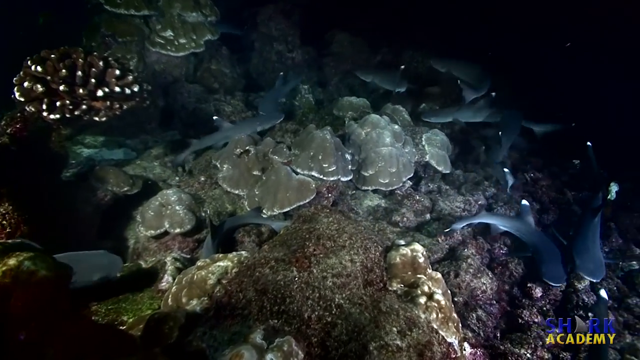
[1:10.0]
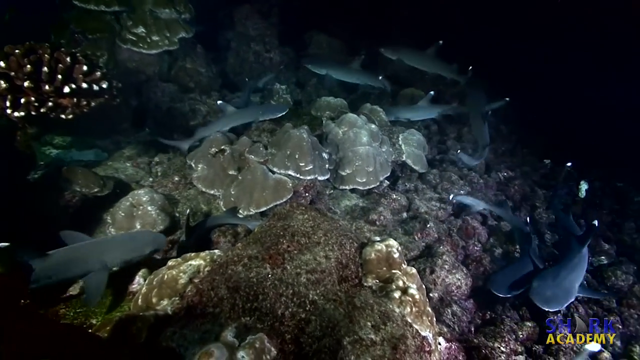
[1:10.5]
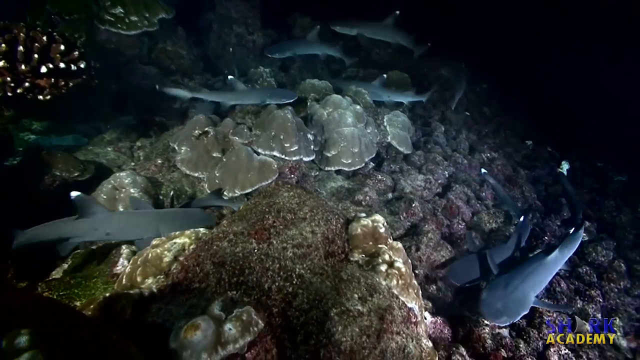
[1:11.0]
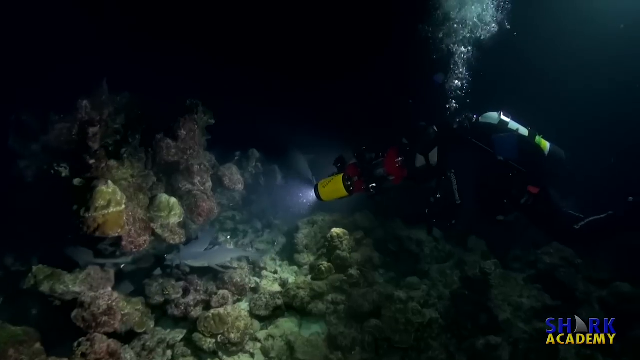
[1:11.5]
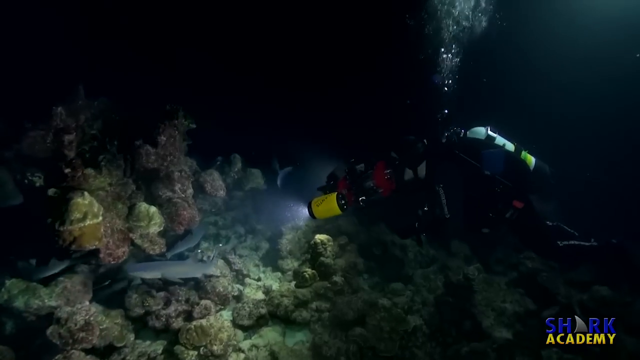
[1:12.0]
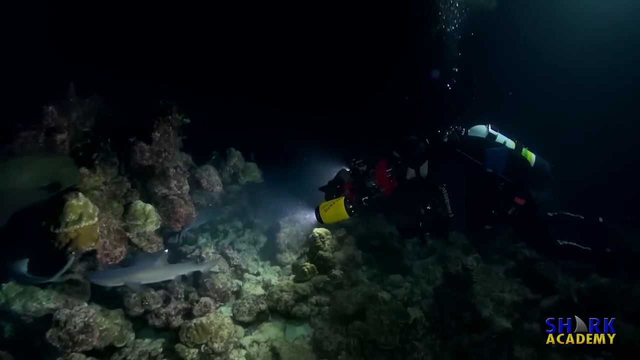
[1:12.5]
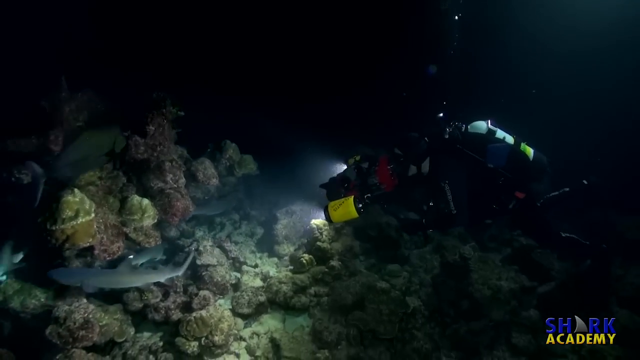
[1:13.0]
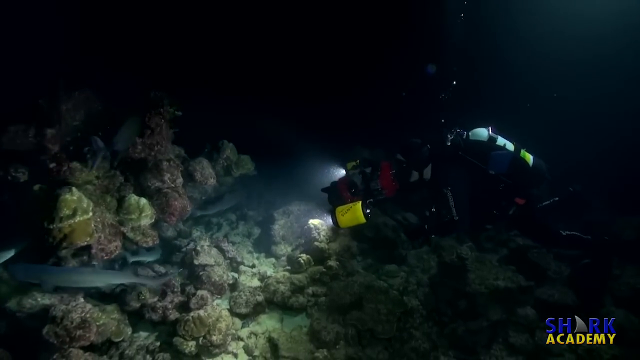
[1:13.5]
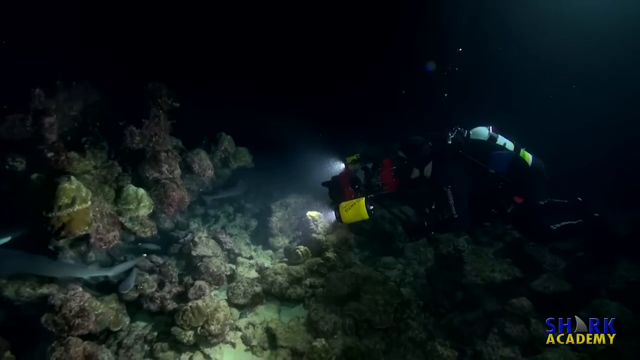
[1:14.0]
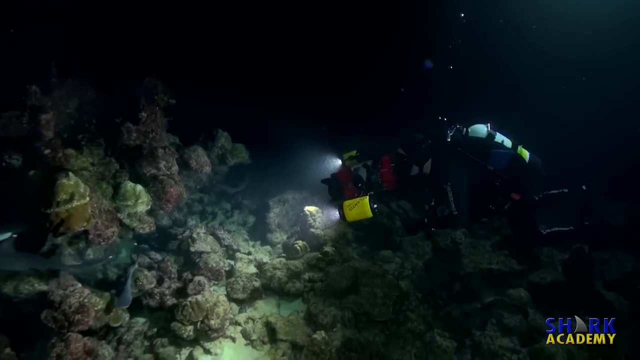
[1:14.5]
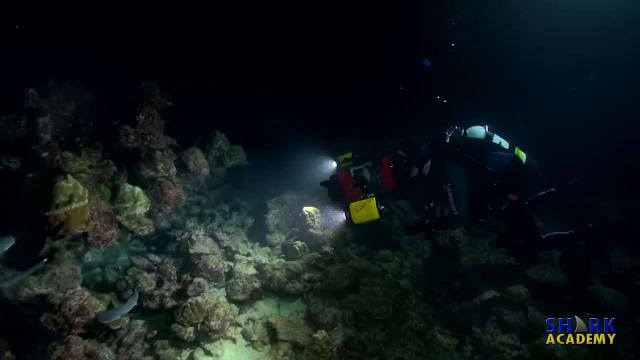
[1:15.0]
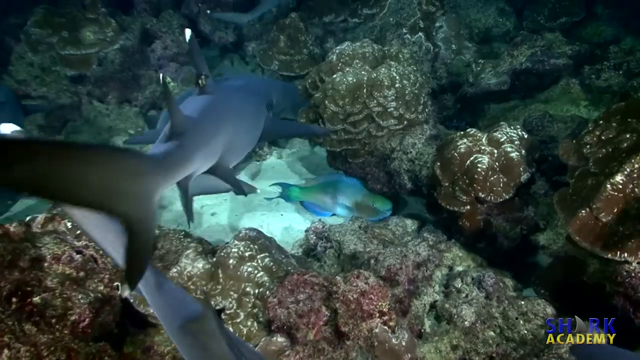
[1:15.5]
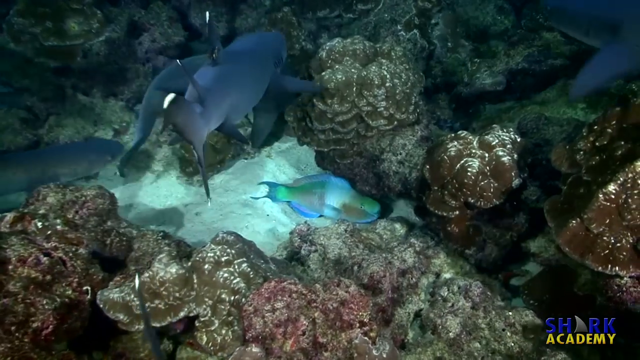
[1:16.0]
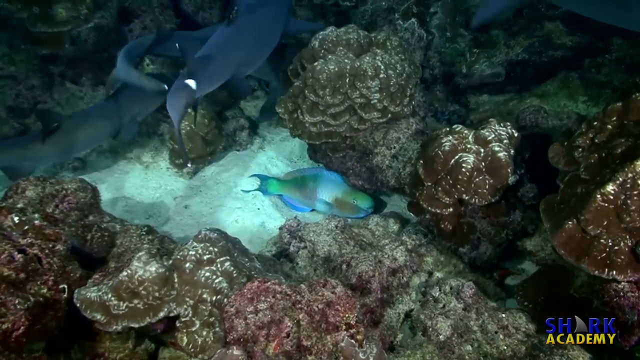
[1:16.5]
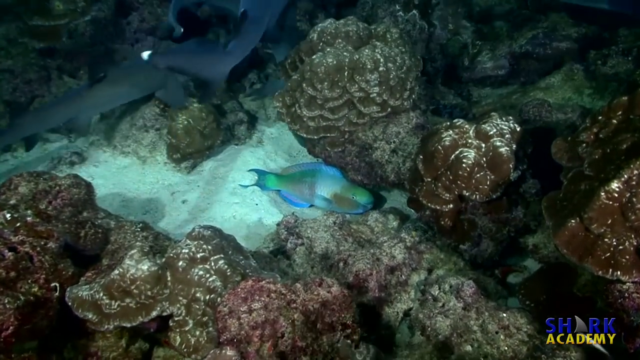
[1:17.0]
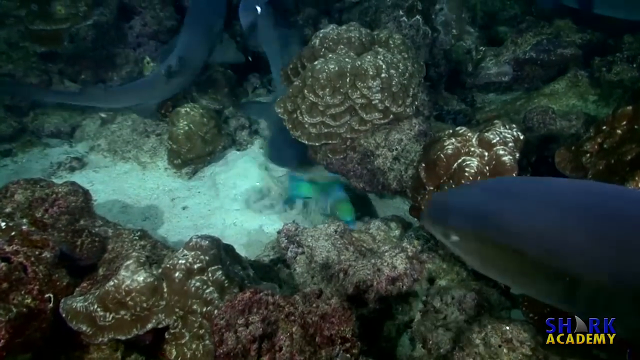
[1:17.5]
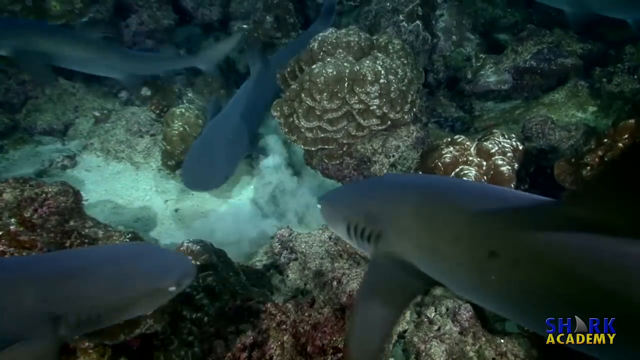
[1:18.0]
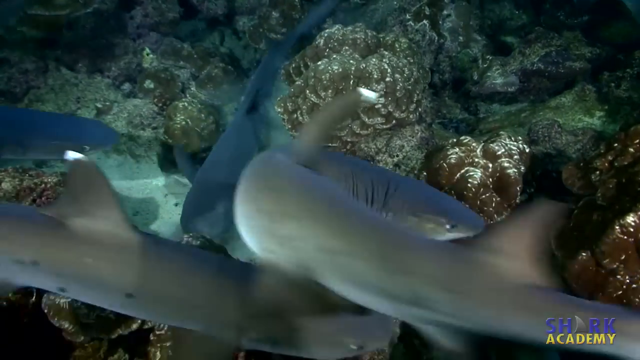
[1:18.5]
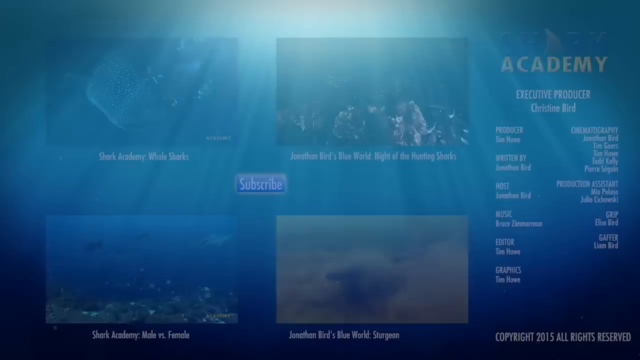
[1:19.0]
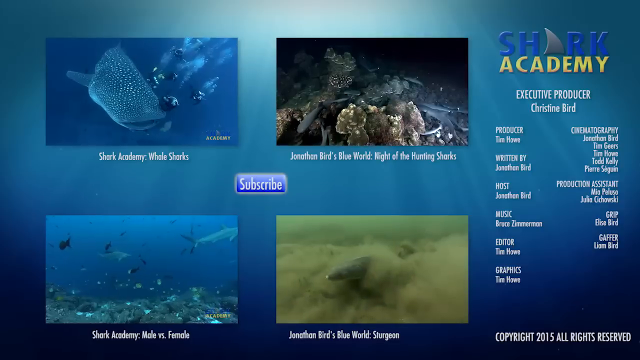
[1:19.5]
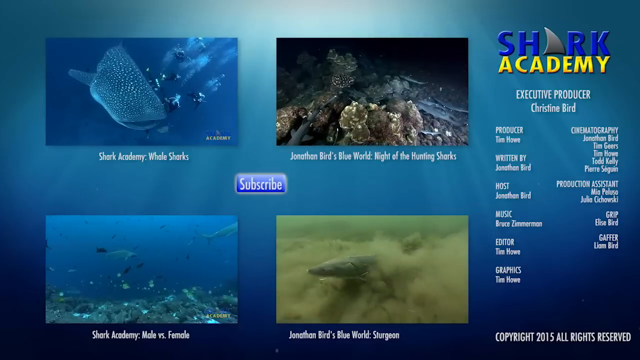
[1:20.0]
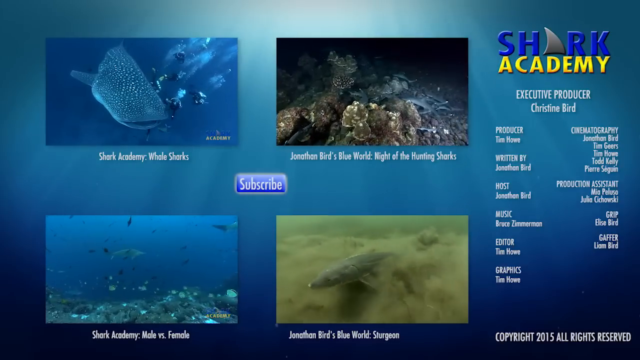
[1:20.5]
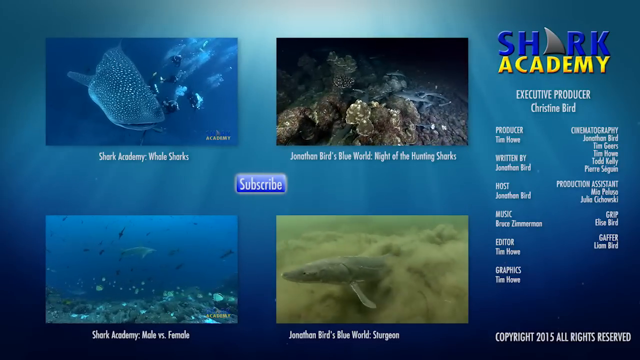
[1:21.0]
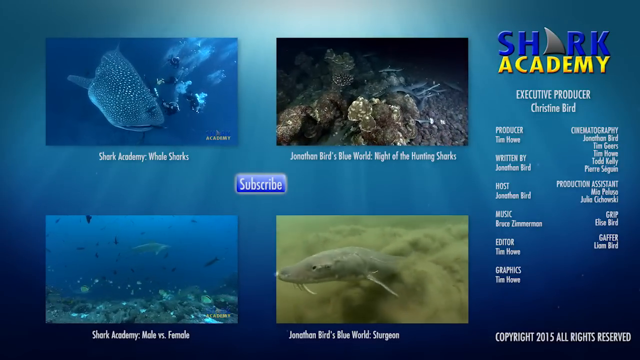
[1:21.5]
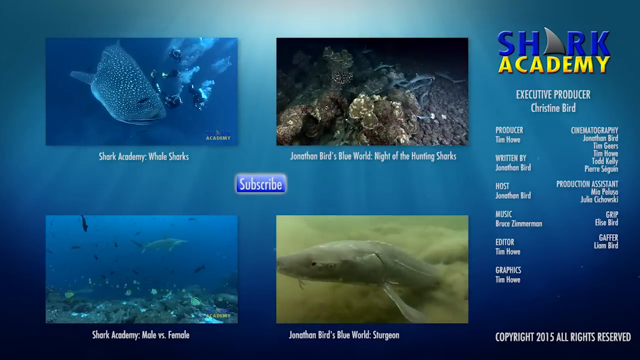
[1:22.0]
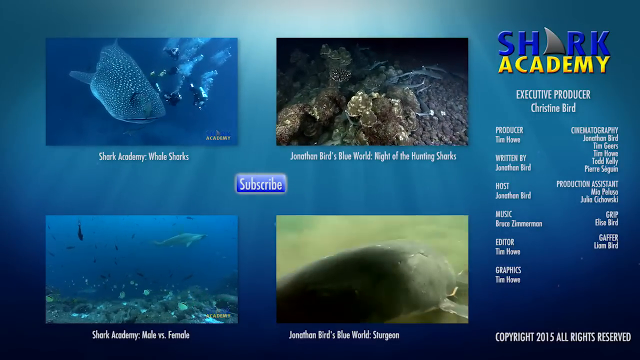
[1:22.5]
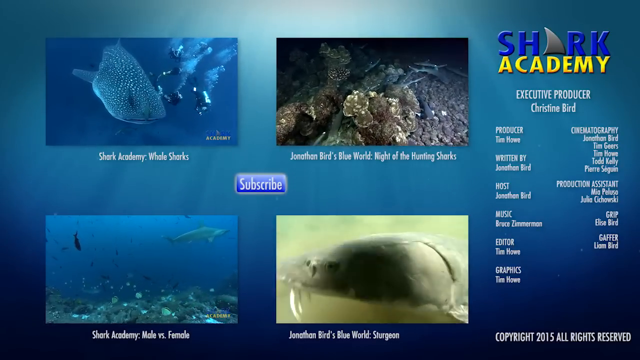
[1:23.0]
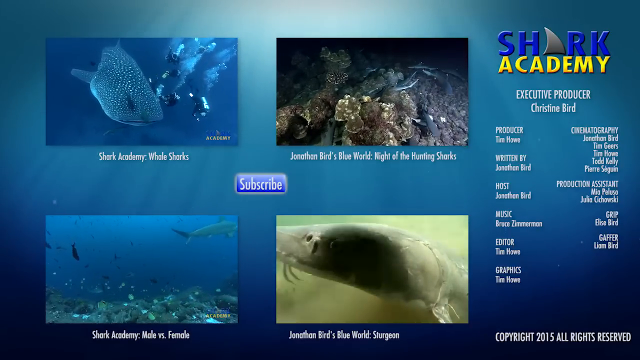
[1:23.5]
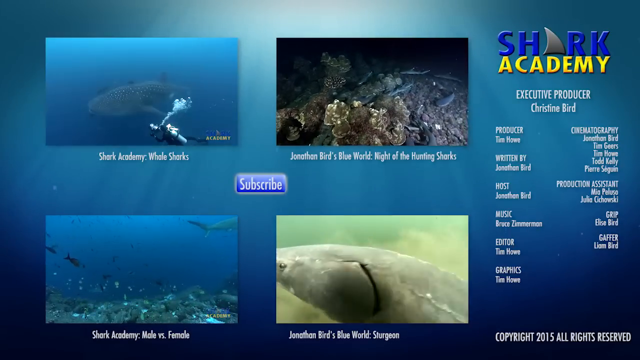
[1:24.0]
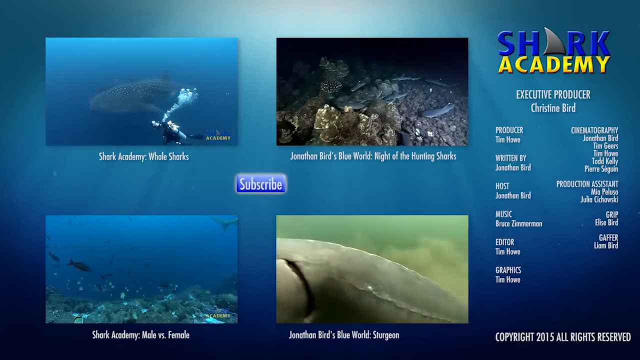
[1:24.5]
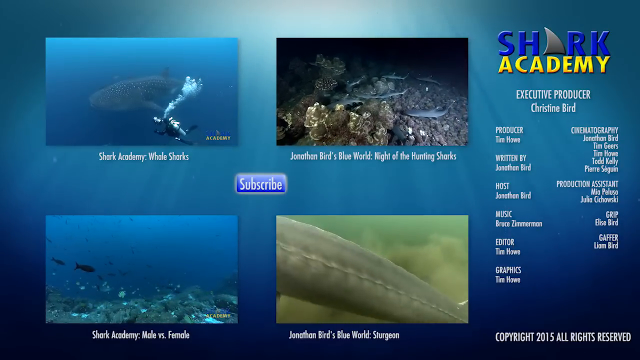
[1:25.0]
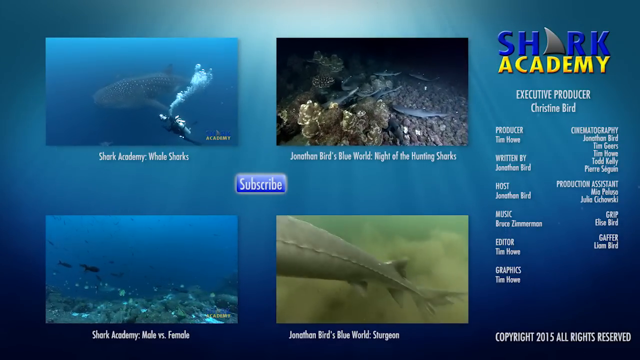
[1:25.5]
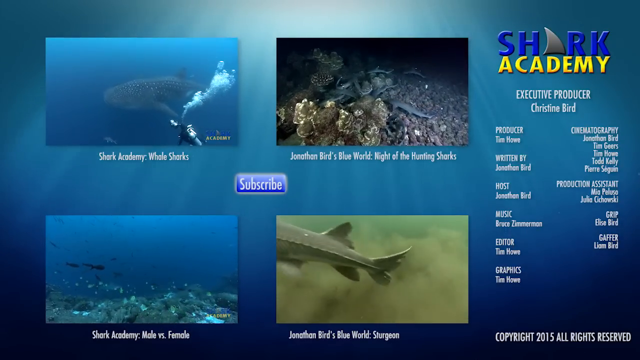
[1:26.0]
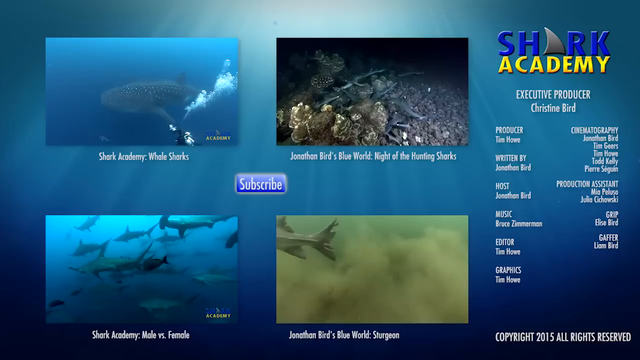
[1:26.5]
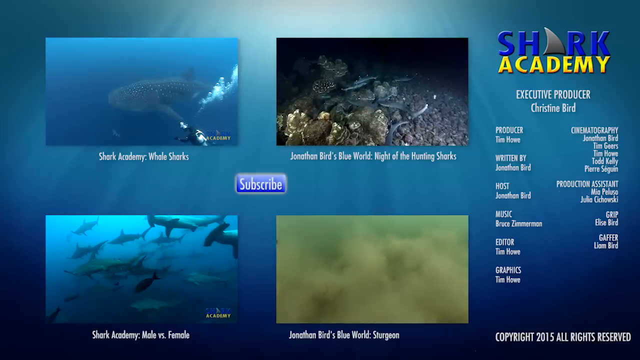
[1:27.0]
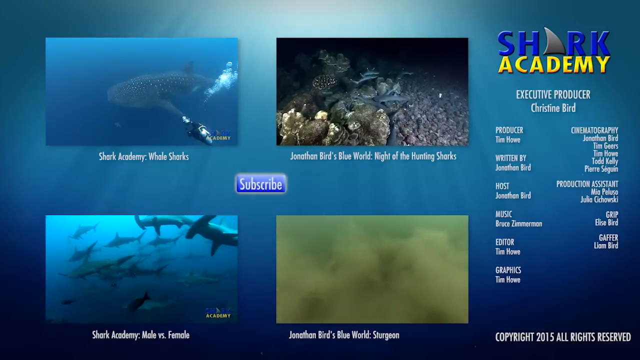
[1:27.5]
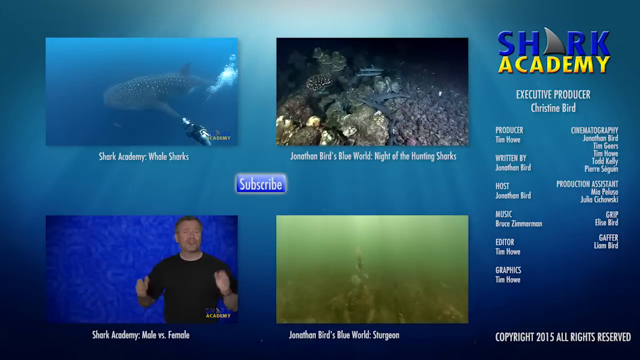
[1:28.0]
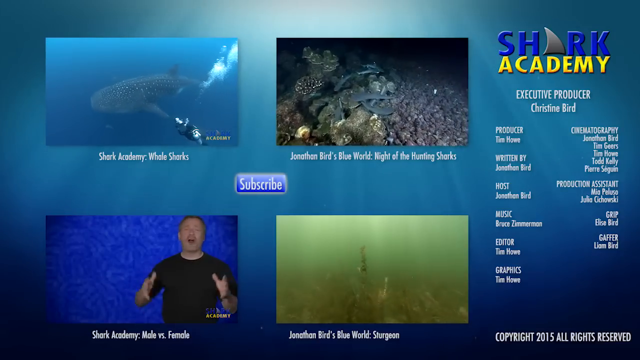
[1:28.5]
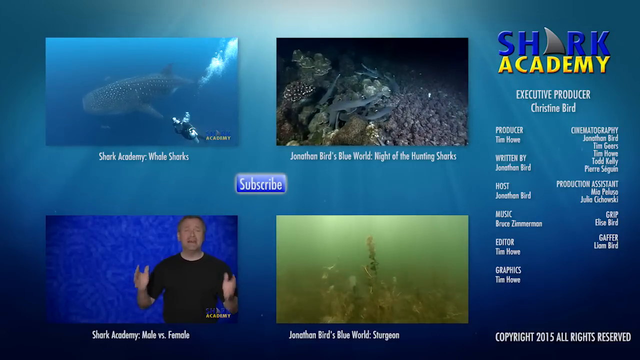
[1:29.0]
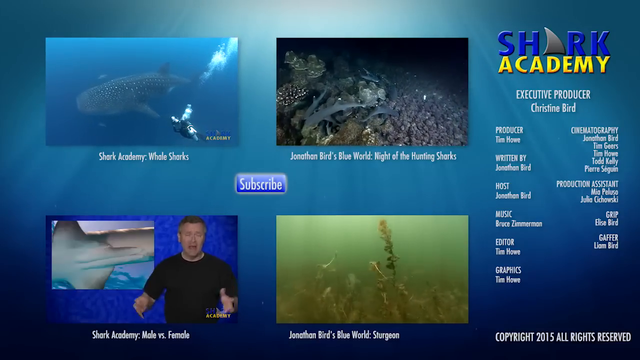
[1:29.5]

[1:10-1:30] The school of sharks continues swimming around rocks and vegetation on the seafloor. The video cuts to what looks like two scuba divers swimming close to the school of sharks, carrying lights and apparently cameras, seemingly trying to film the sharks. It then cuts to the end credits for Shark Academy. On the right side of the screen, "Shark Academy" is at the top, followed by a list of people who worked on it, including executive producer Christine Bird and other names below, with producer, cinematographer, production assistant, host Jonathan Bird, and music. On the left side of the screen there are four smaller thumbnails showing scenes of fish swimming from other episodes, and in the center there is a square that says "subscribe."